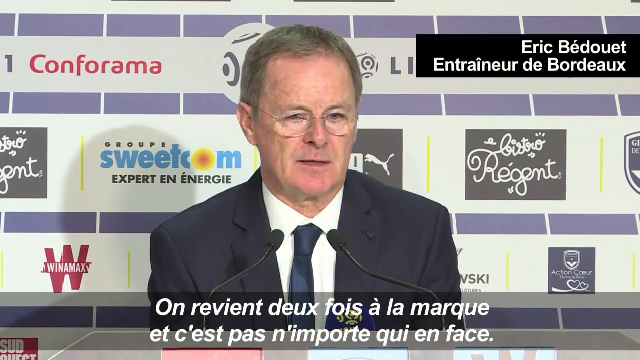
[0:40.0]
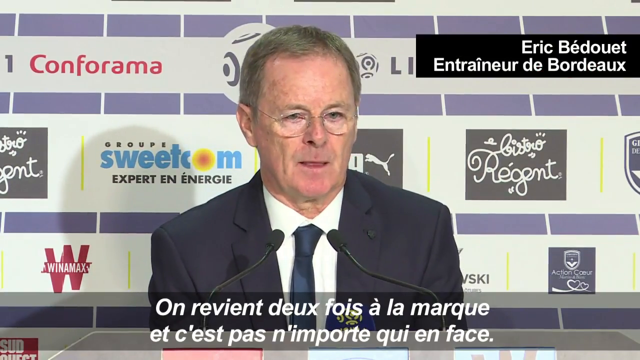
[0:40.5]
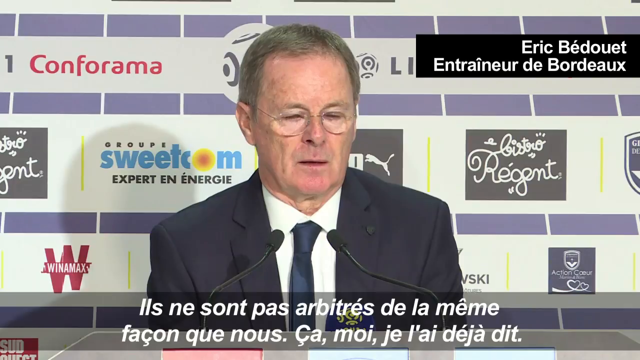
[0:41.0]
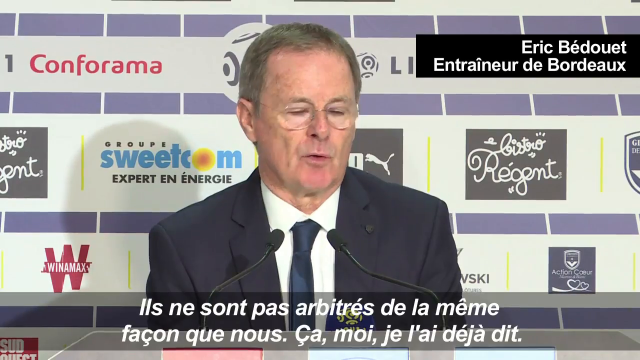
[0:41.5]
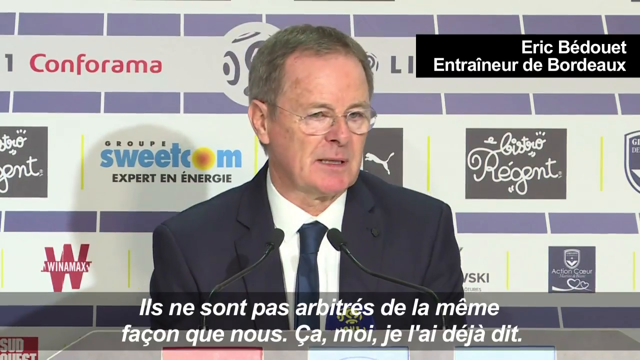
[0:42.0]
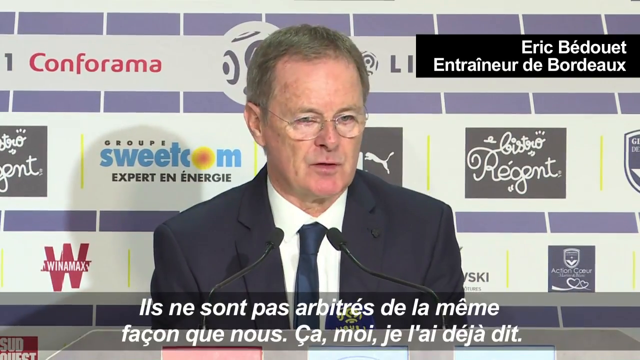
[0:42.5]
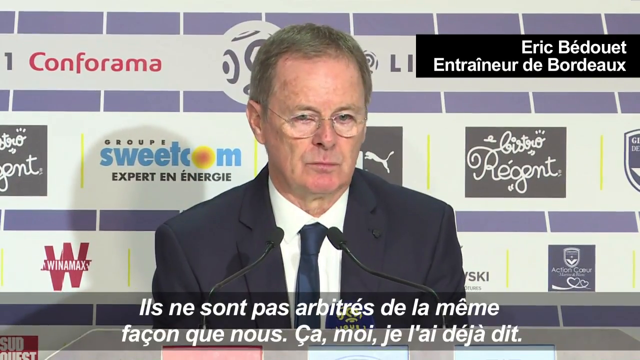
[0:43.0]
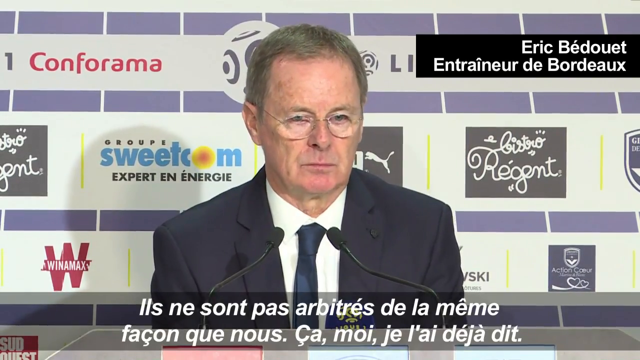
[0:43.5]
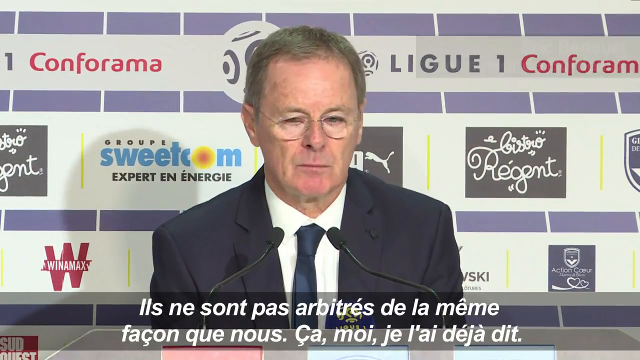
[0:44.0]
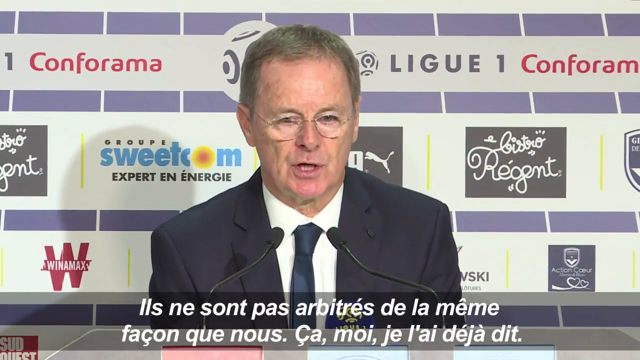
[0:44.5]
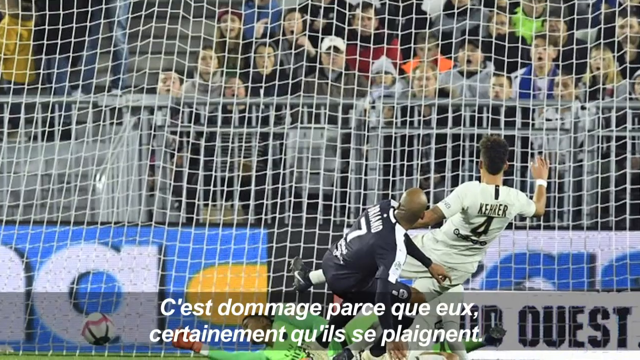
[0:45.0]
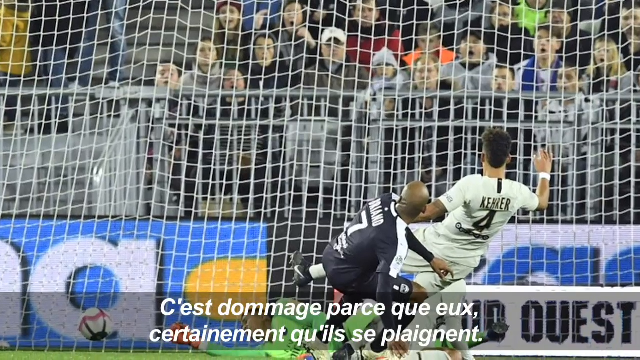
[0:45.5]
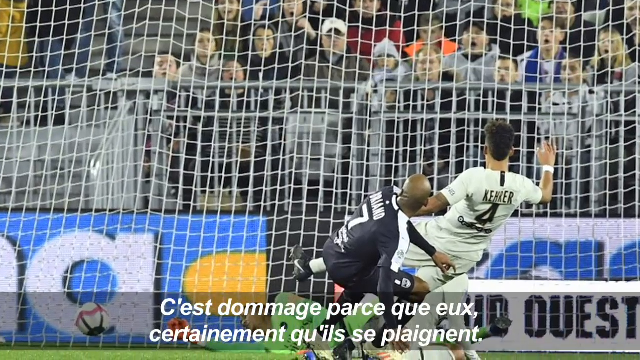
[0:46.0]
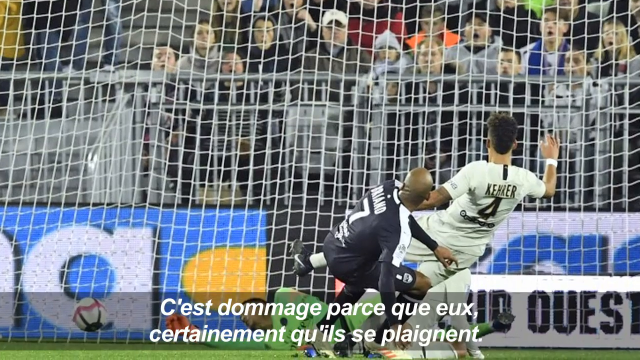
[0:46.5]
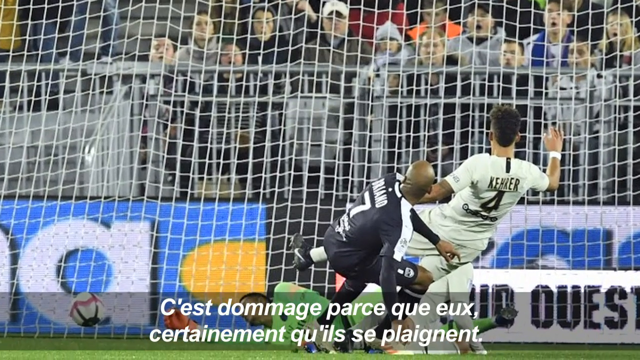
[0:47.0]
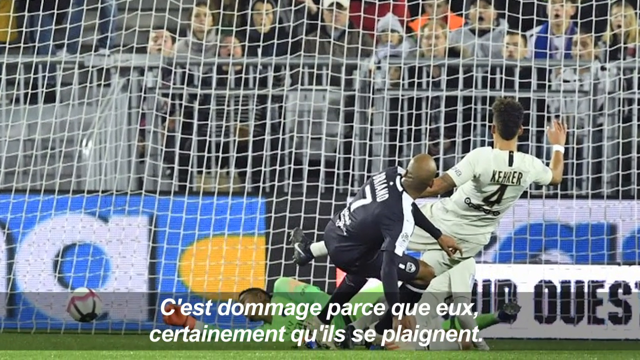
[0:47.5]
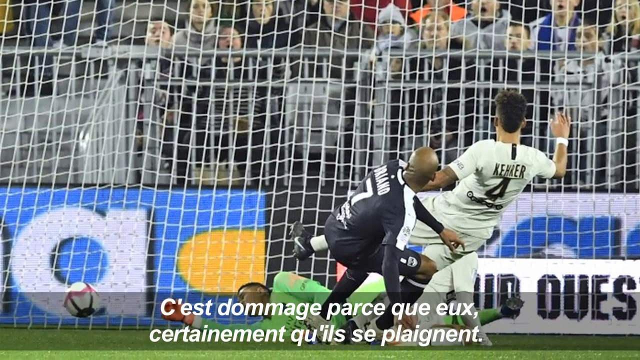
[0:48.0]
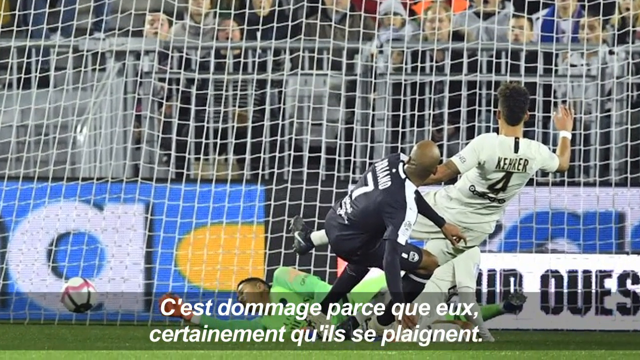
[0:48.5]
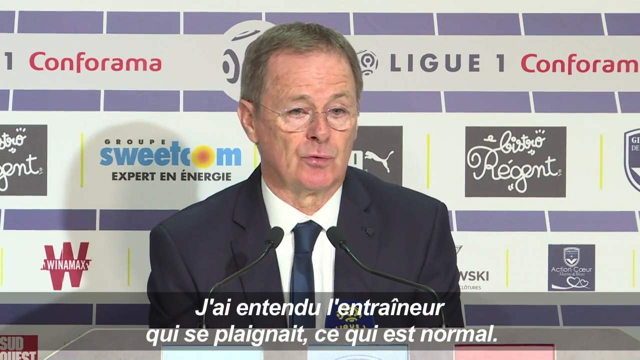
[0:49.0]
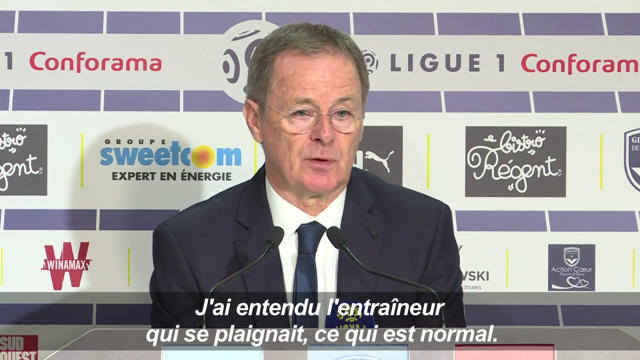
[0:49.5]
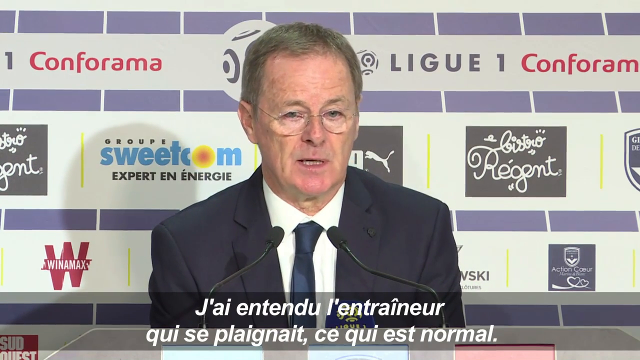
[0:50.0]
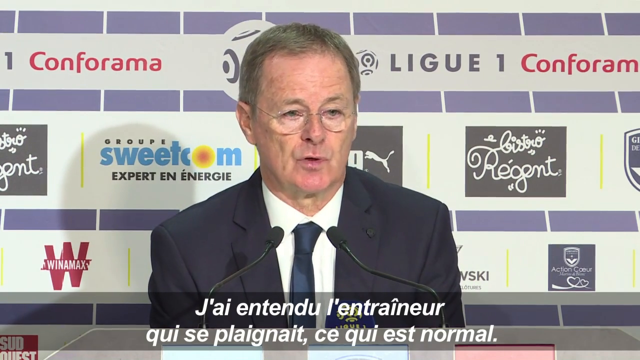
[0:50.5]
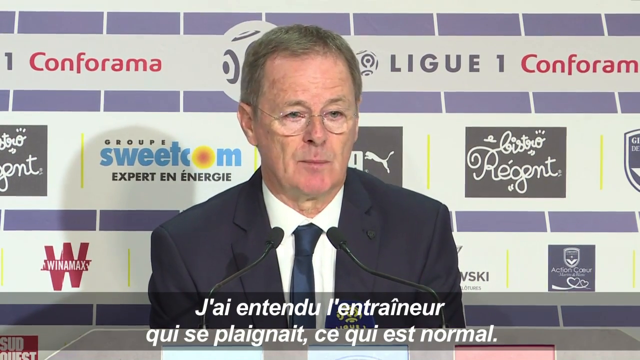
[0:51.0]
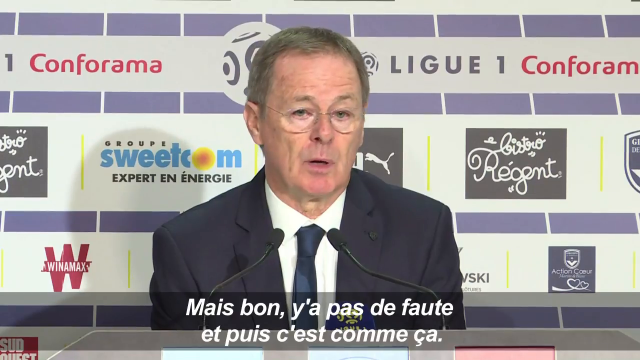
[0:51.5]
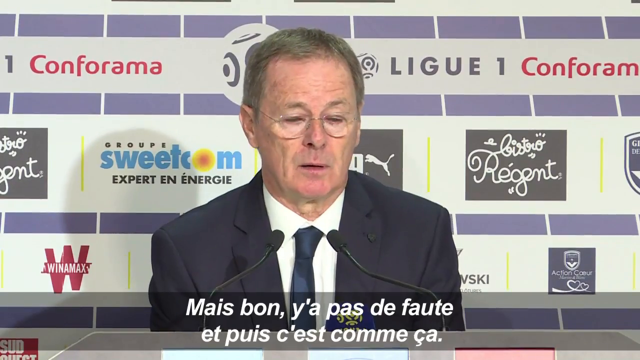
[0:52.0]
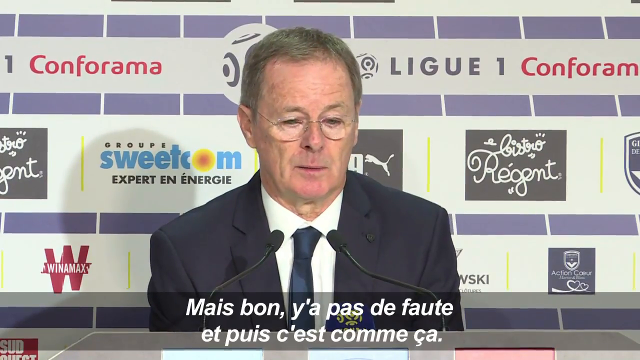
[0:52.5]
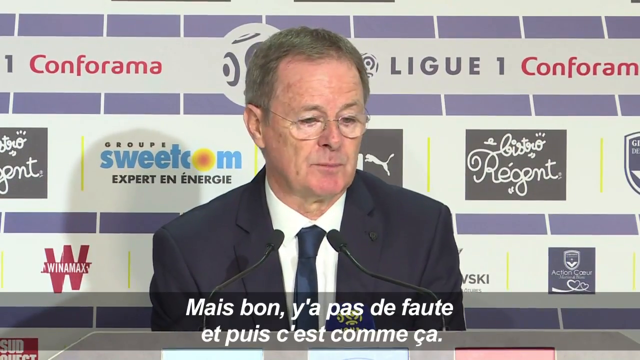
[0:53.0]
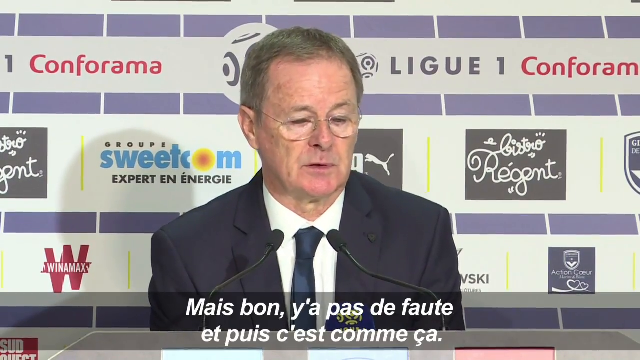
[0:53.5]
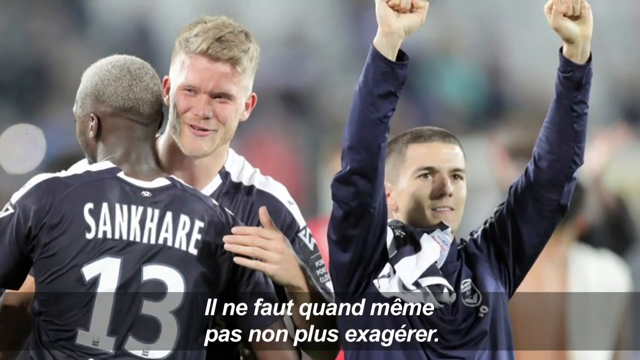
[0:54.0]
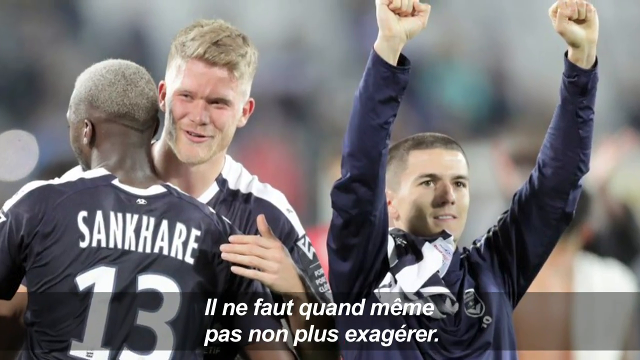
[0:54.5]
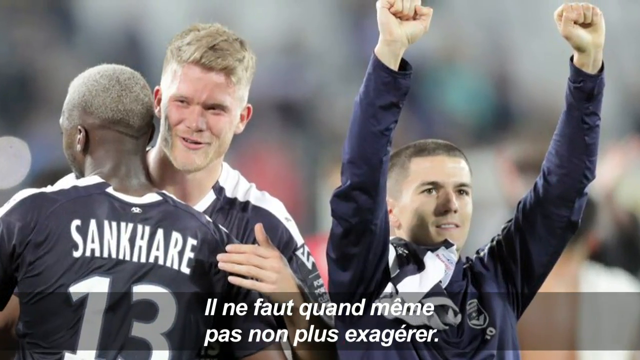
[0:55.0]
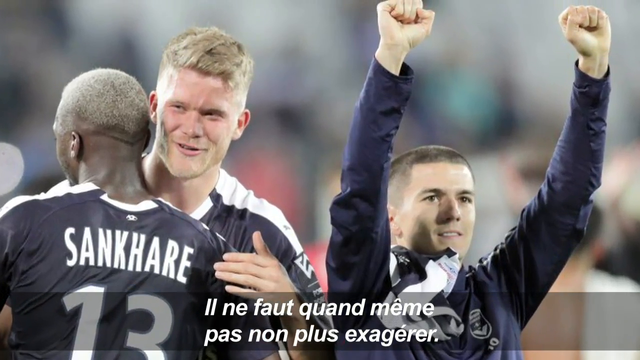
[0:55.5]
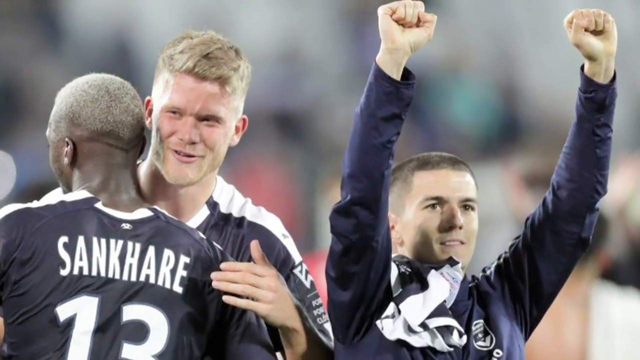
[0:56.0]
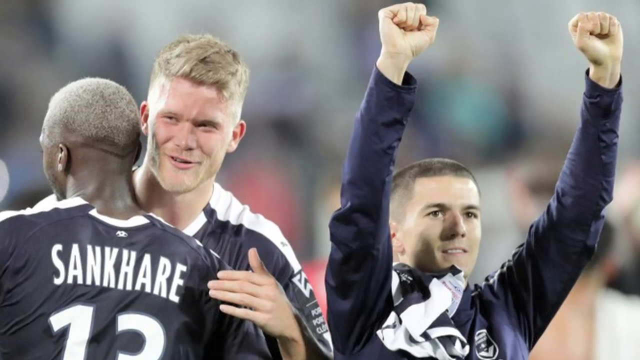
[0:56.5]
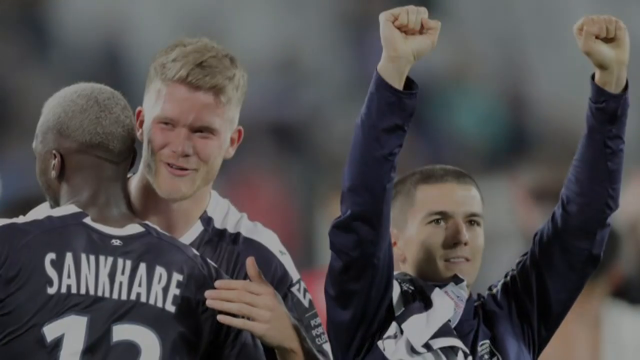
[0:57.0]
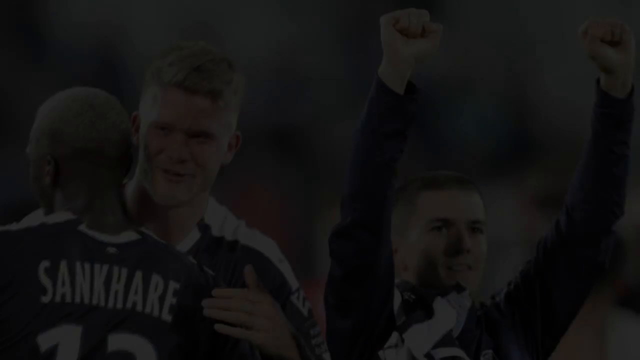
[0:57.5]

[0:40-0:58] An older gentleman, the coach of the other team, talks at the press conference. Behind him is a board with advertisements for different companies, his name is shown with his credentials, and there are two microphones in front of him. Images of critical moments in the game appear, and a team celebrates at the end of the game. After he finishes talking, the video cuts to black.